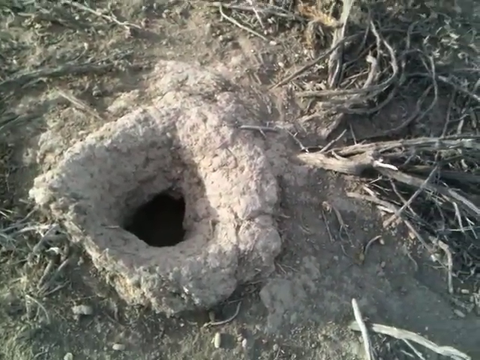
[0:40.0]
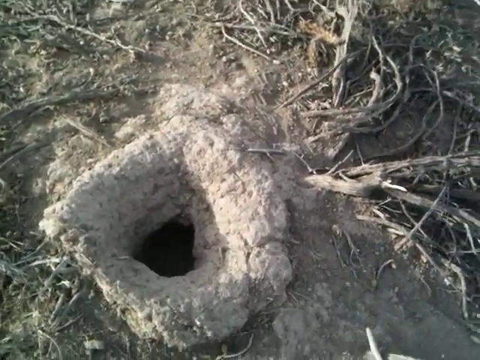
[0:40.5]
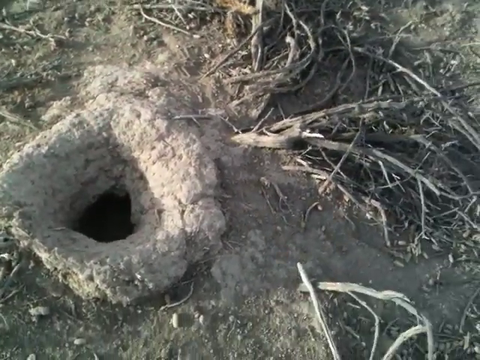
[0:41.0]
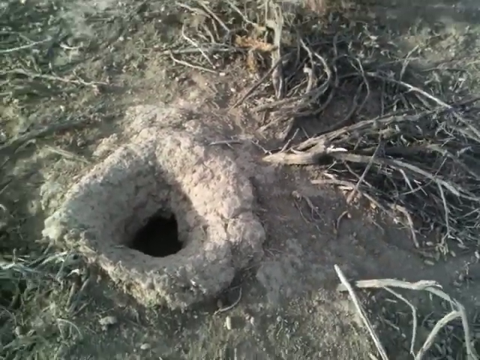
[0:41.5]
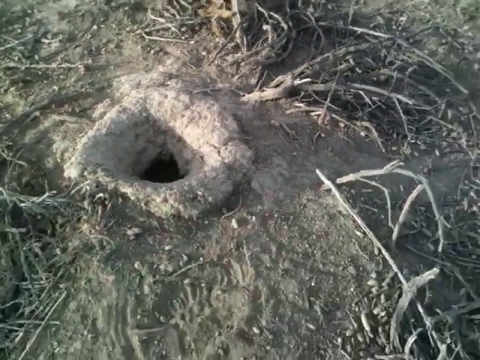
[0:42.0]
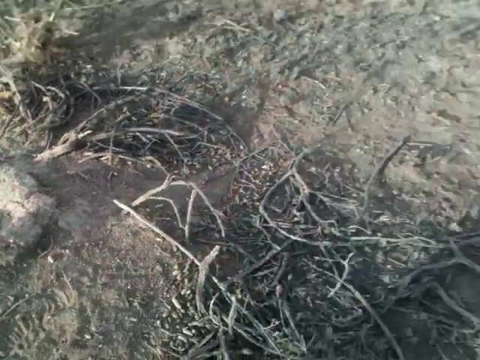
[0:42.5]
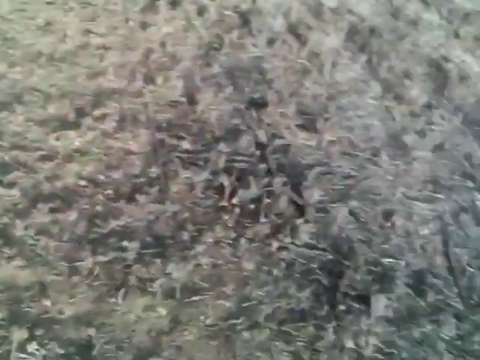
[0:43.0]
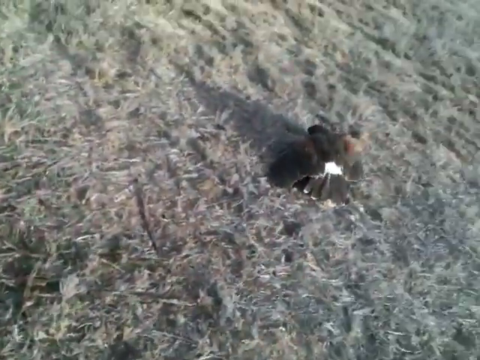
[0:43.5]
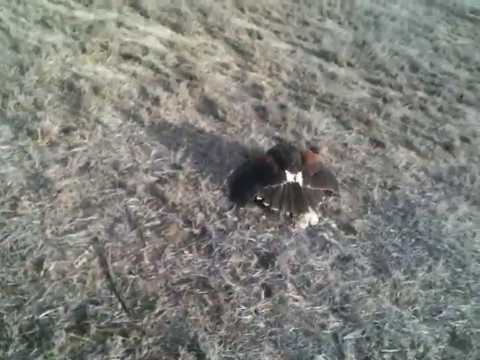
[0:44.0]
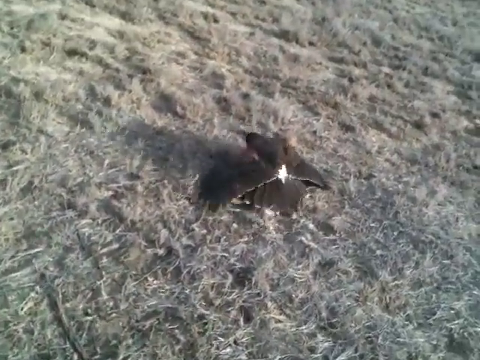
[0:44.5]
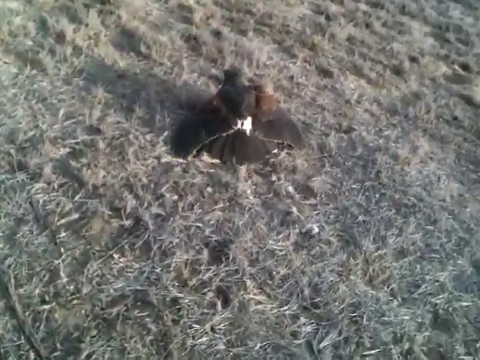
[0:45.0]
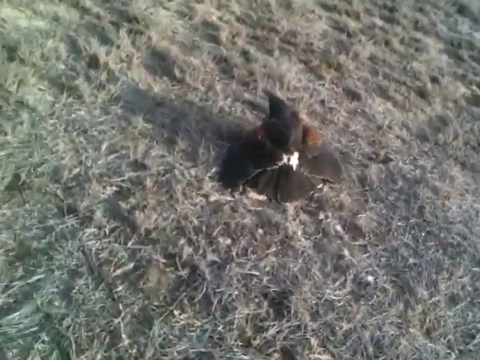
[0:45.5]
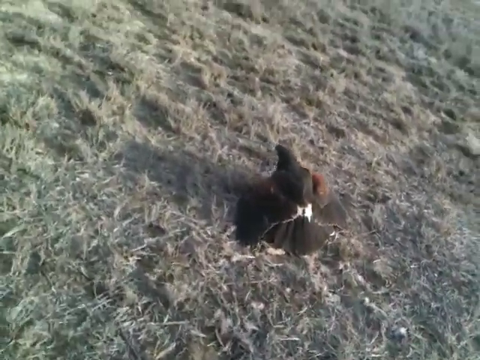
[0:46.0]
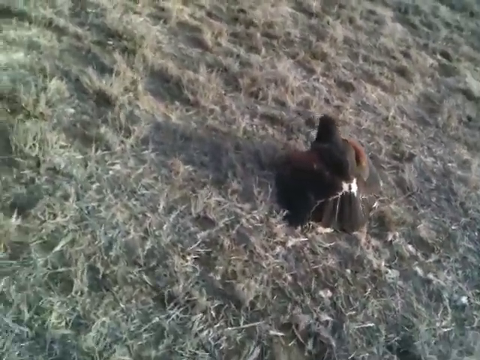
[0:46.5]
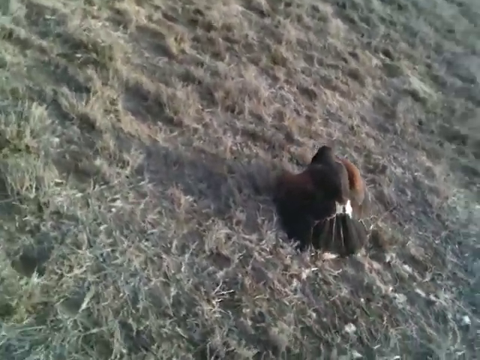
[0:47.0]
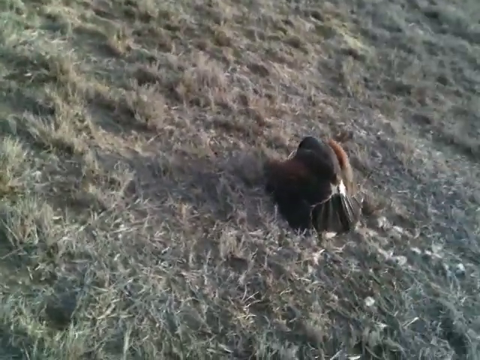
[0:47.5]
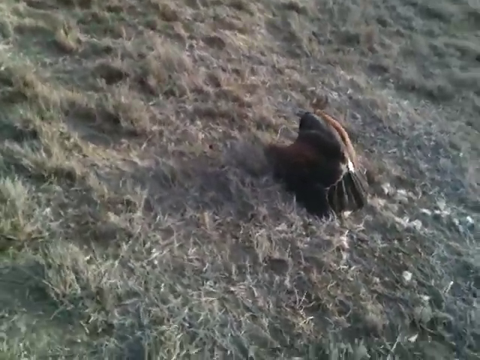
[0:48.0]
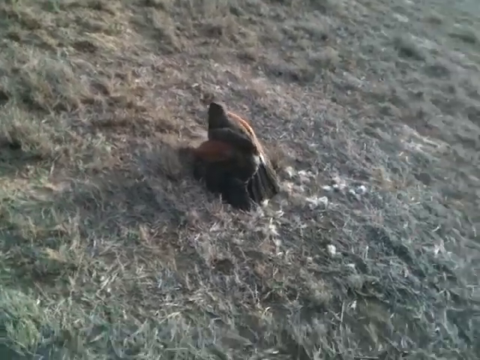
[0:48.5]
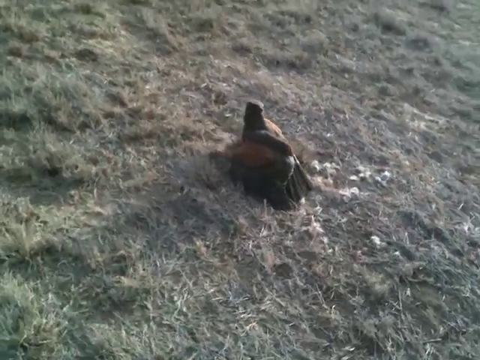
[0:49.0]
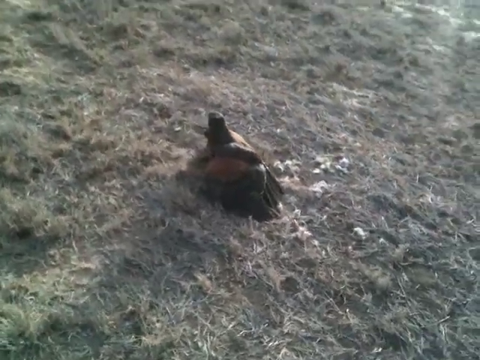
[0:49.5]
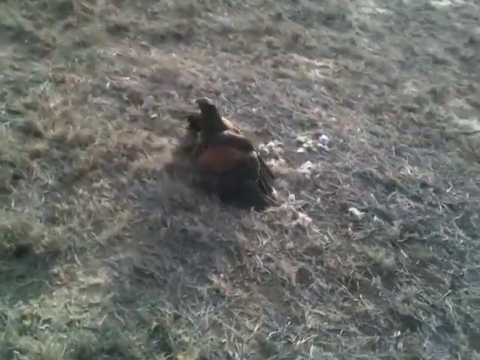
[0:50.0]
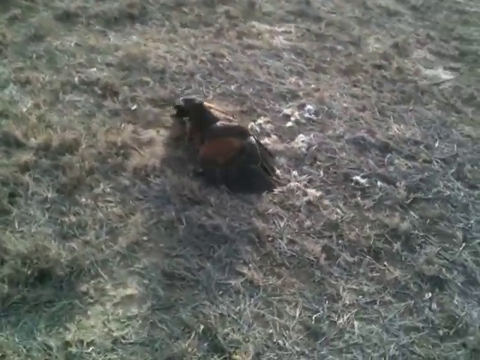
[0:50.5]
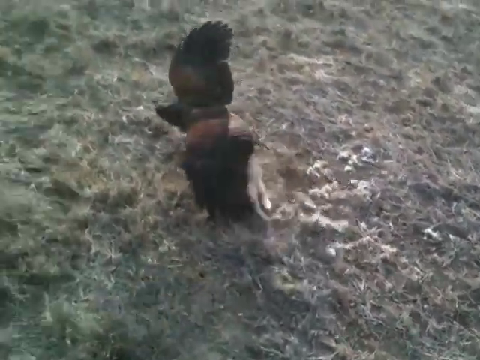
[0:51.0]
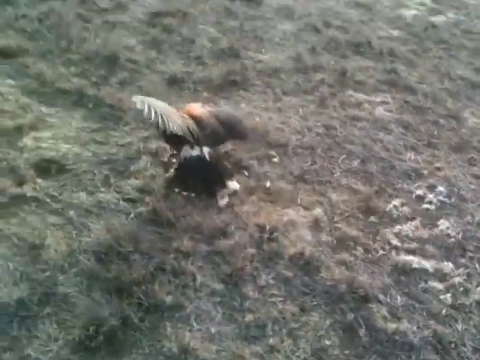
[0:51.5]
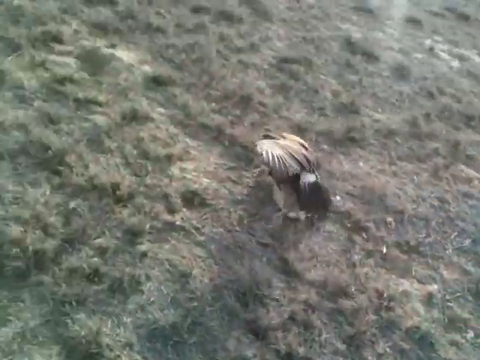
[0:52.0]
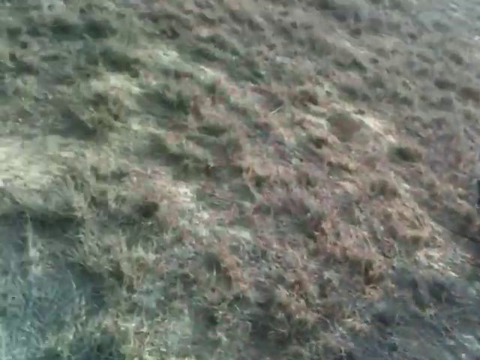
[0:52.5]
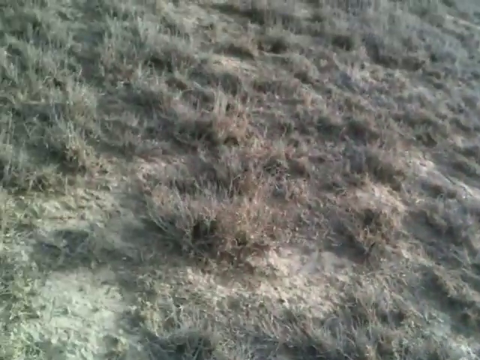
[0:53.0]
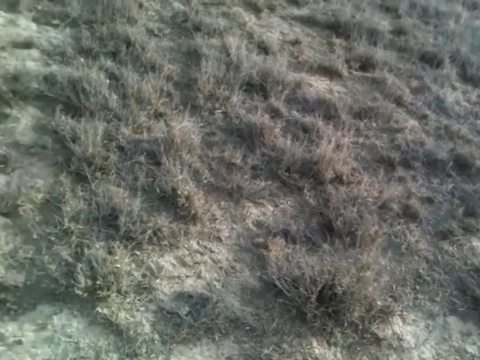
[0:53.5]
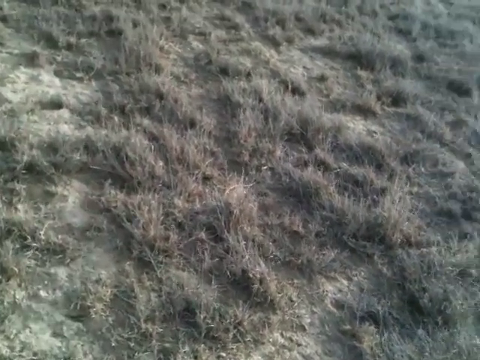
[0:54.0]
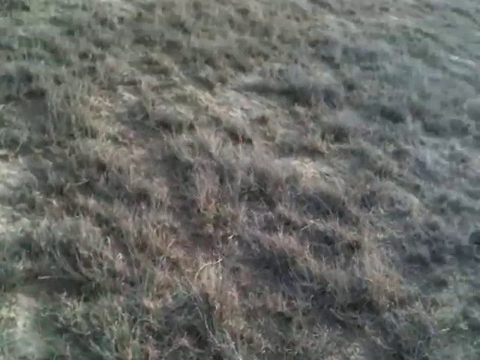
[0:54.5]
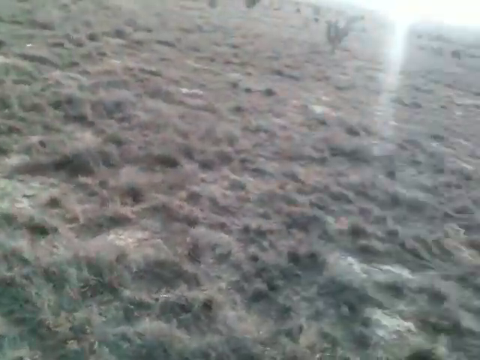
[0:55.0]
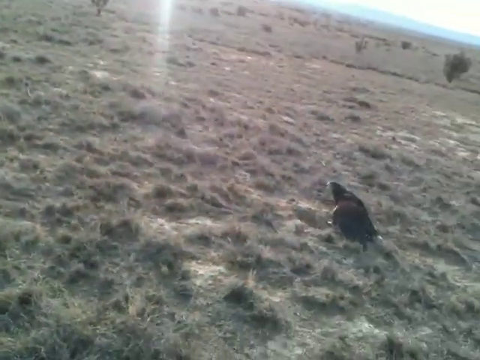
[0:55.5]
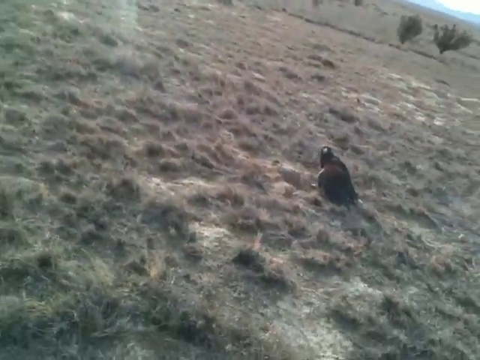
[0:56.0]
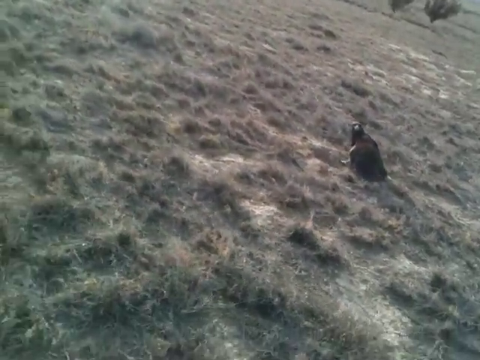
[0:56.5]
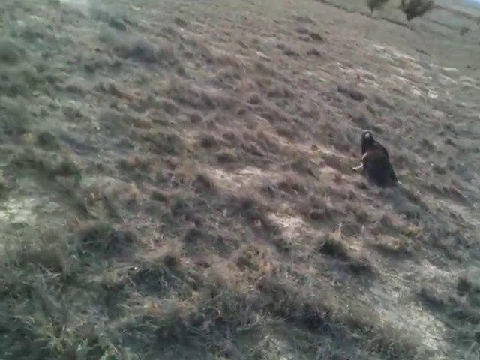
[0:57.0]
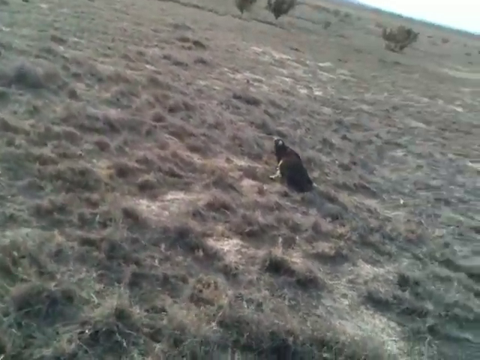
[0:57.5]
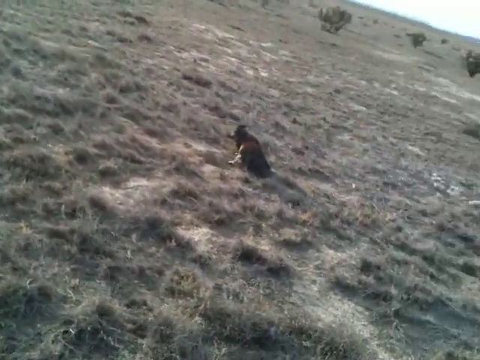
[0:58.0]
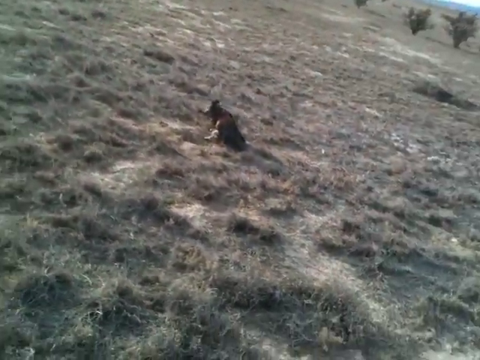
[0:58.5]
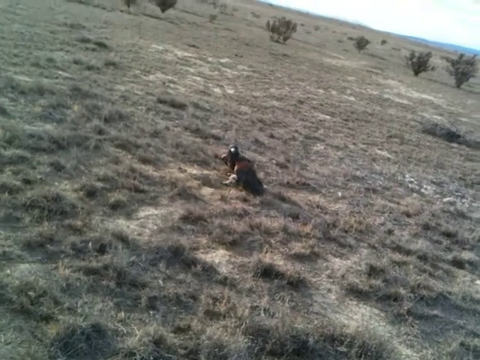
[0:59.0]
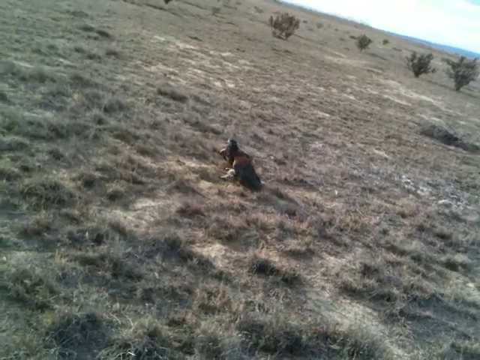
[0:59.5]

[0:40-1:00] A hole in the ground looks dark inside and deep. White soil is visible outside the hole, apparently the soil that came from inside it when it was dug. On the side of the hole there is dry soil, and the roots there are dry with no leaves. The man with the camera moves it away to show the bird feasting on the hare. A lot of fur lies on the ground as the bird removes it with its beak and puts it onto the ground. The grass around them is flat and dry. The man moves around the bird, and the bird stops for a bit, as if sensing something, then moves away holding its meal. The man moves far off to the side, and the bird looks at him.